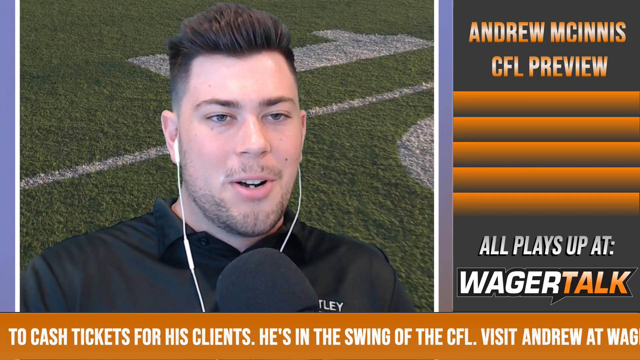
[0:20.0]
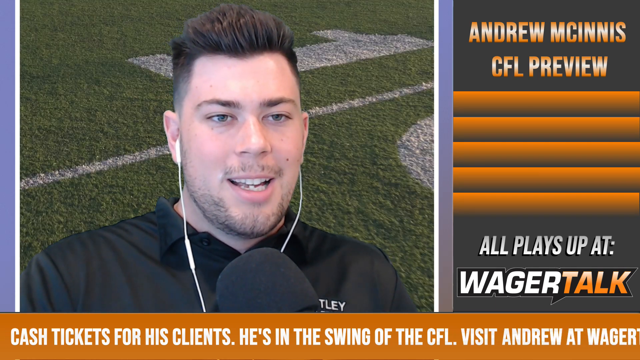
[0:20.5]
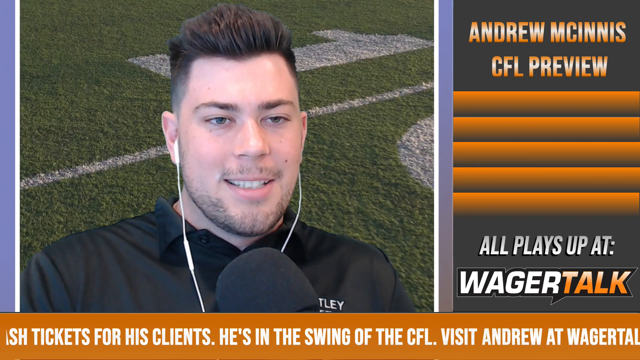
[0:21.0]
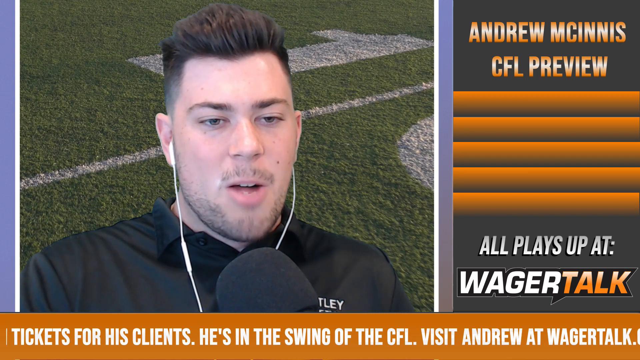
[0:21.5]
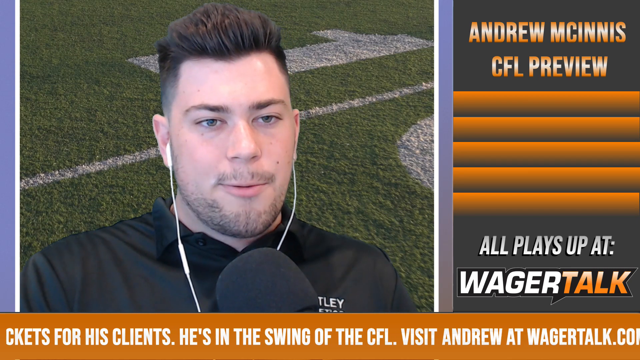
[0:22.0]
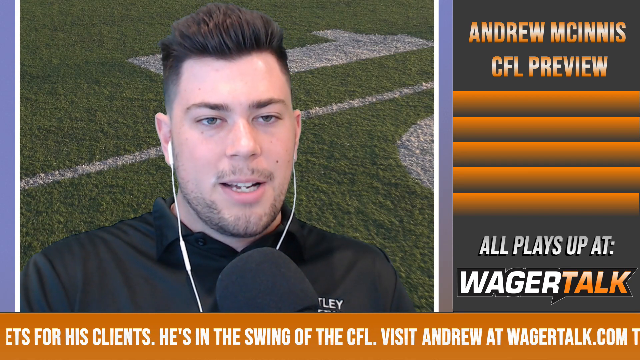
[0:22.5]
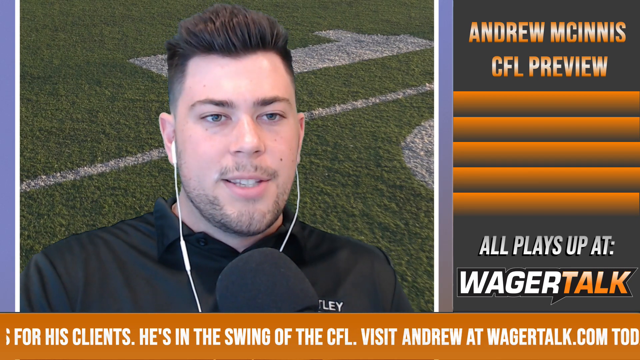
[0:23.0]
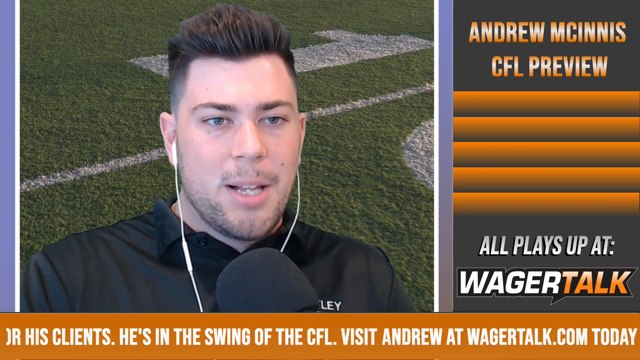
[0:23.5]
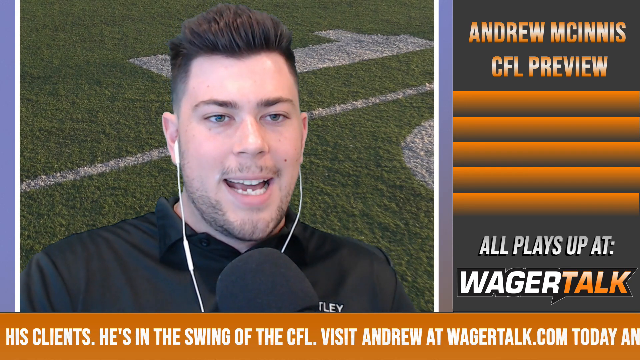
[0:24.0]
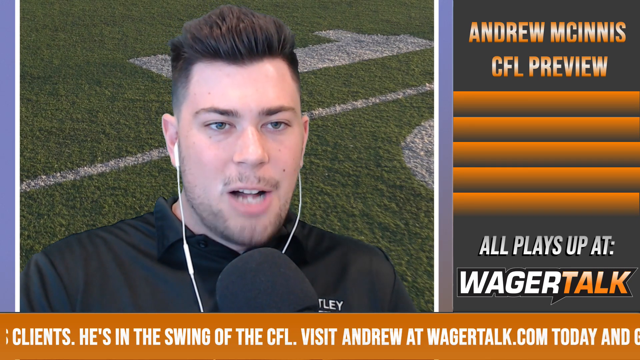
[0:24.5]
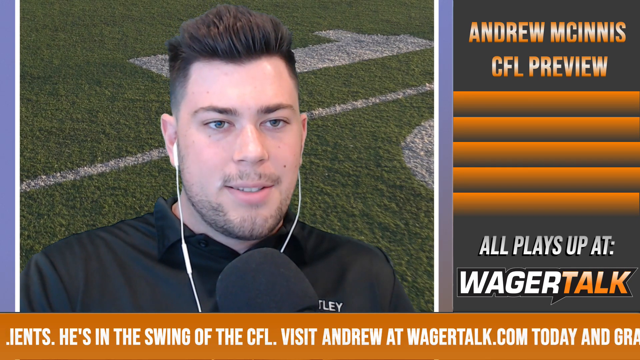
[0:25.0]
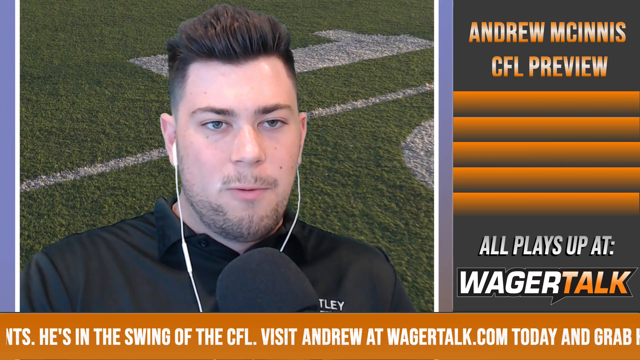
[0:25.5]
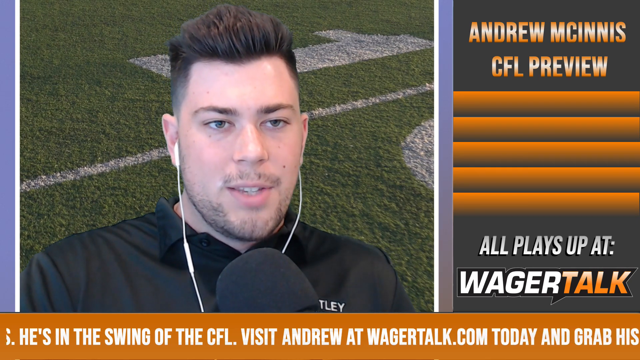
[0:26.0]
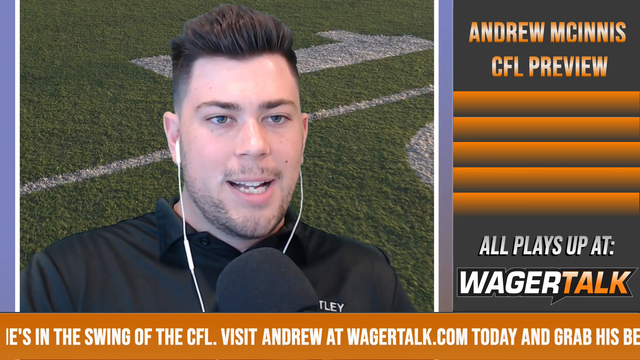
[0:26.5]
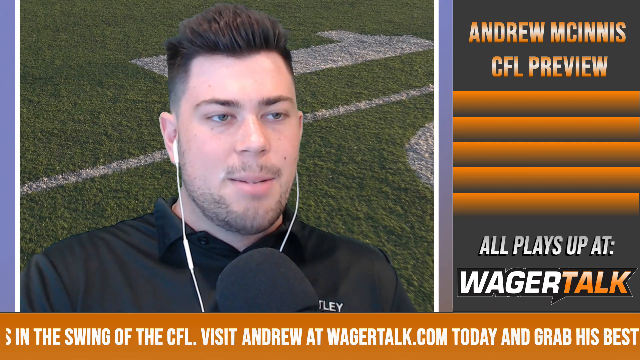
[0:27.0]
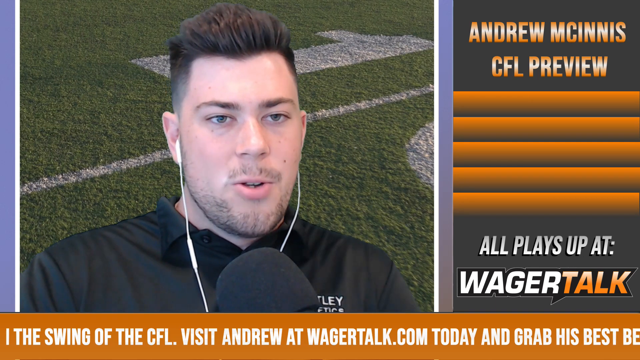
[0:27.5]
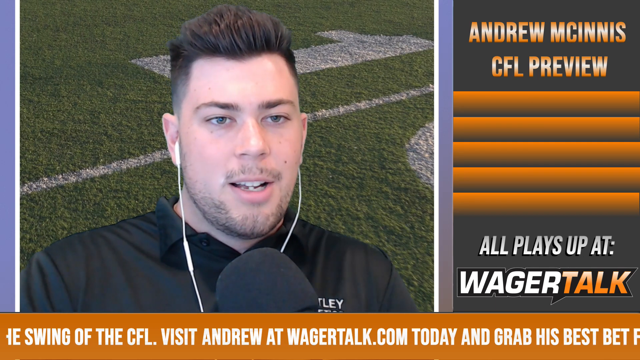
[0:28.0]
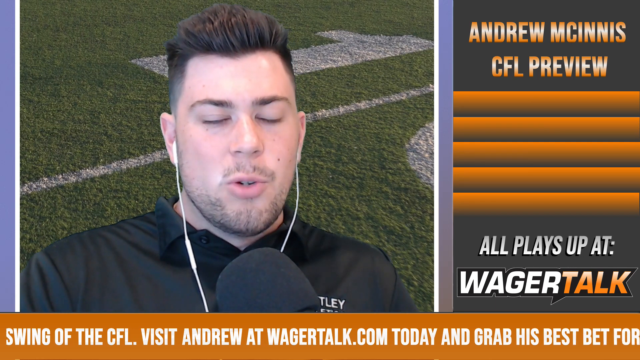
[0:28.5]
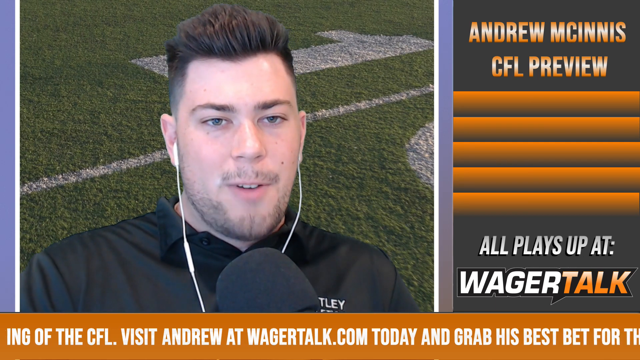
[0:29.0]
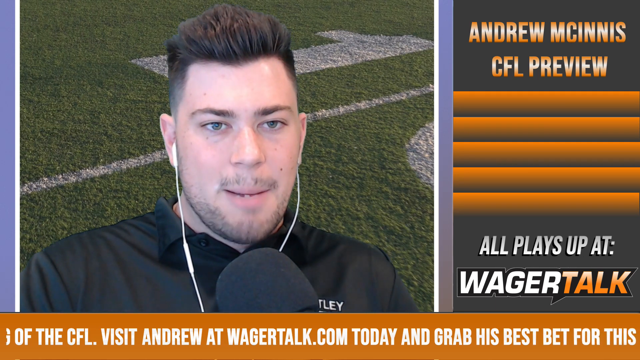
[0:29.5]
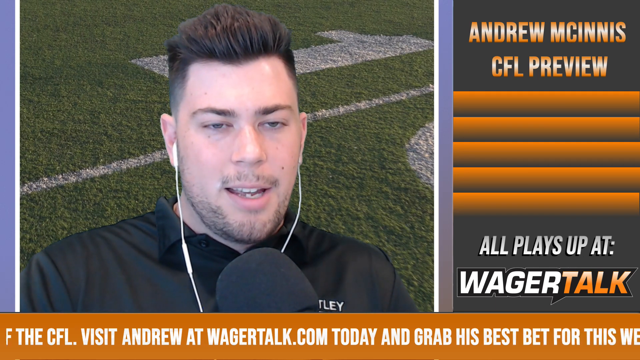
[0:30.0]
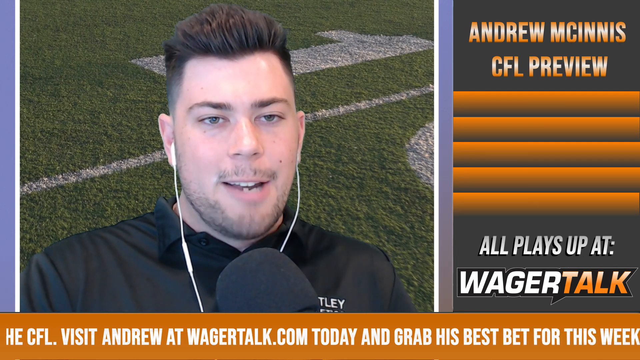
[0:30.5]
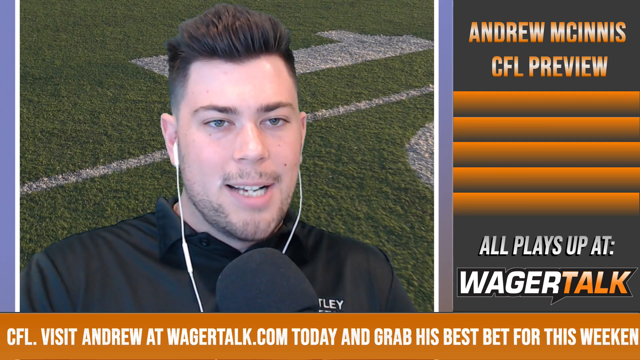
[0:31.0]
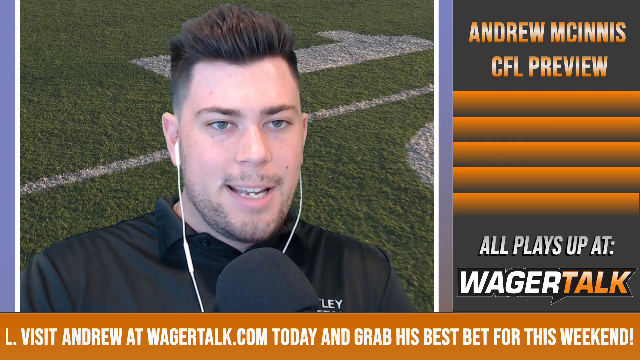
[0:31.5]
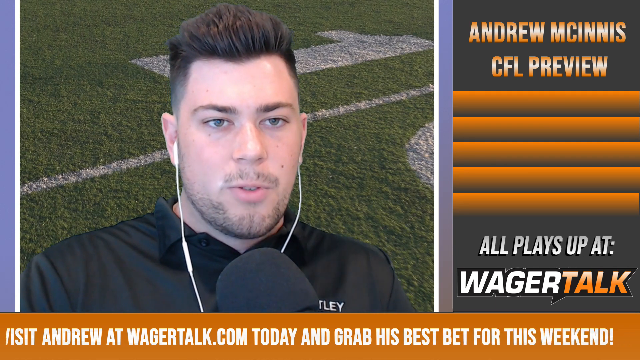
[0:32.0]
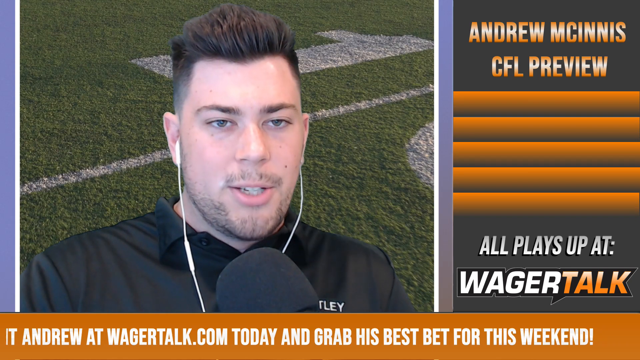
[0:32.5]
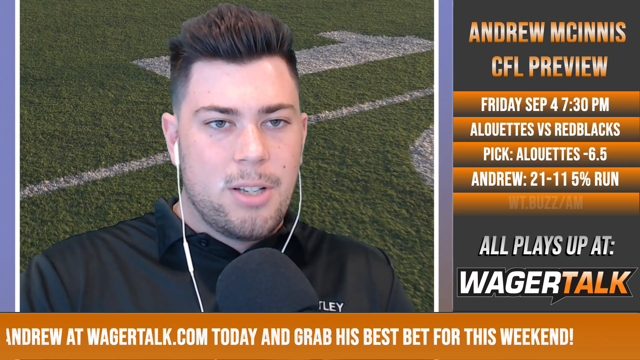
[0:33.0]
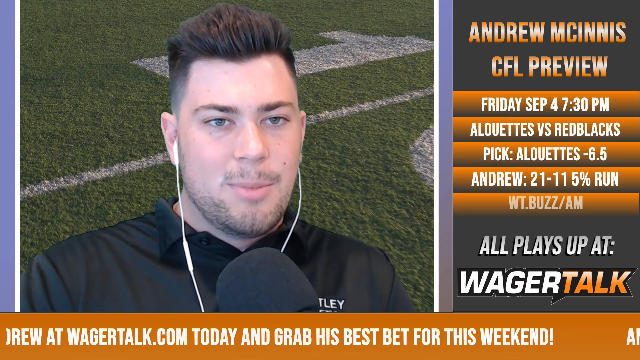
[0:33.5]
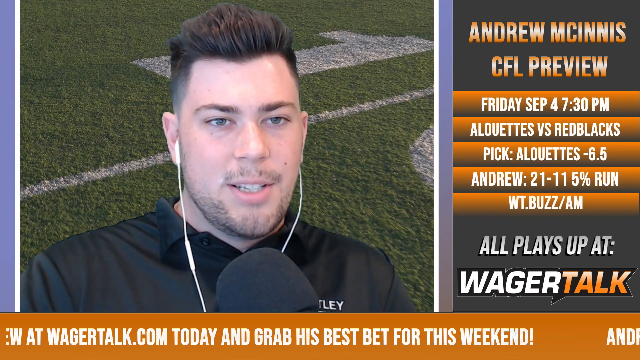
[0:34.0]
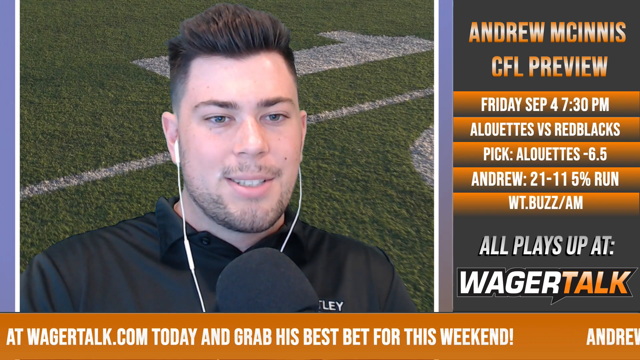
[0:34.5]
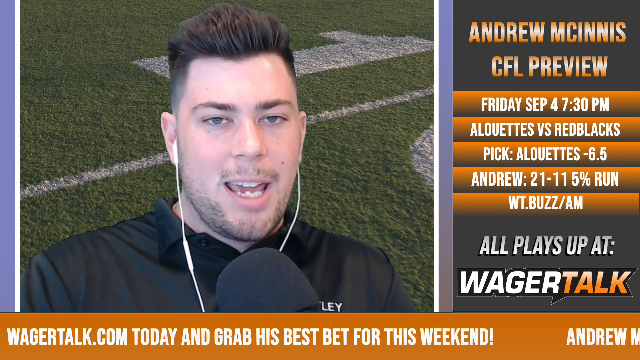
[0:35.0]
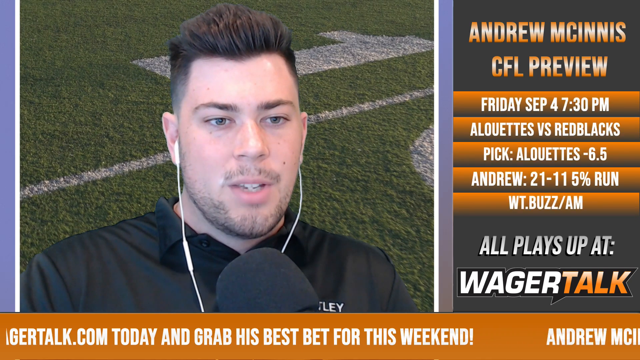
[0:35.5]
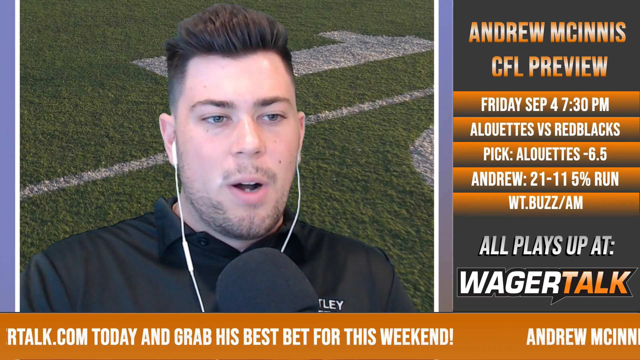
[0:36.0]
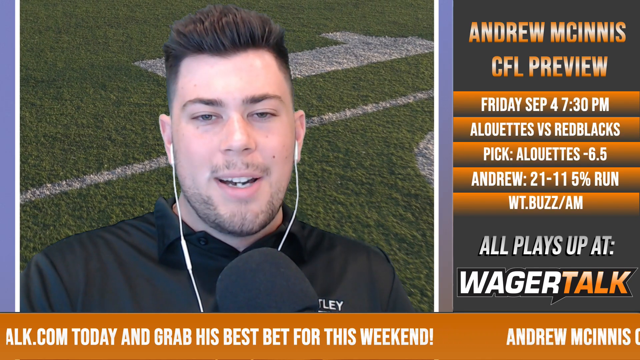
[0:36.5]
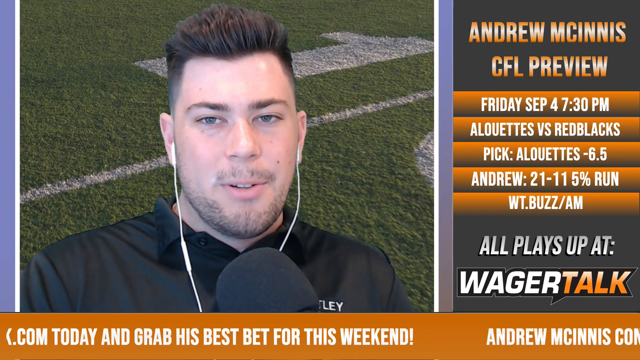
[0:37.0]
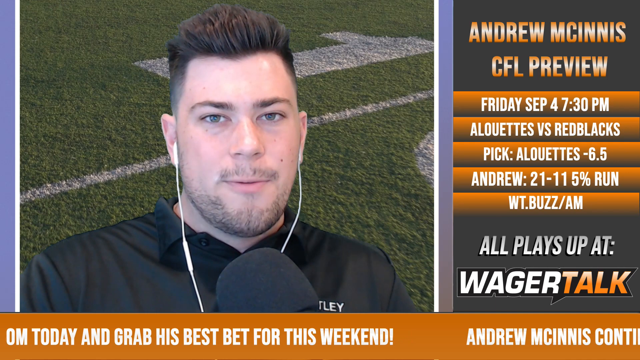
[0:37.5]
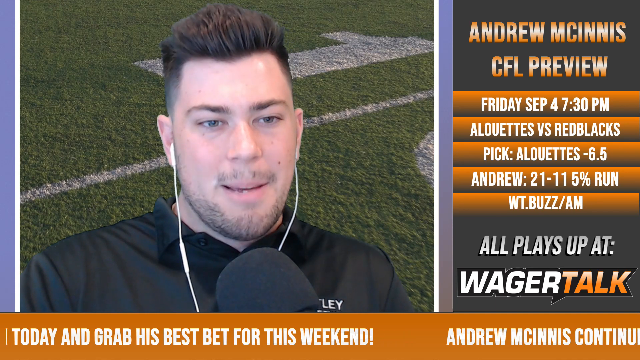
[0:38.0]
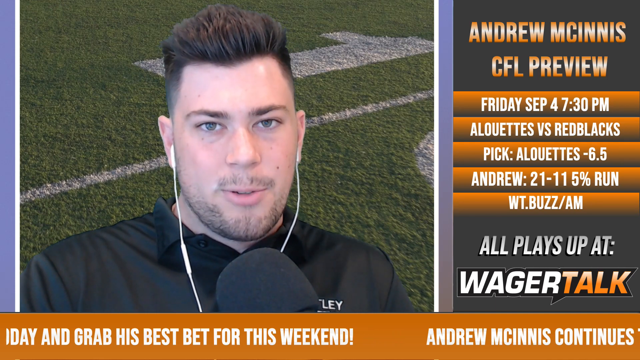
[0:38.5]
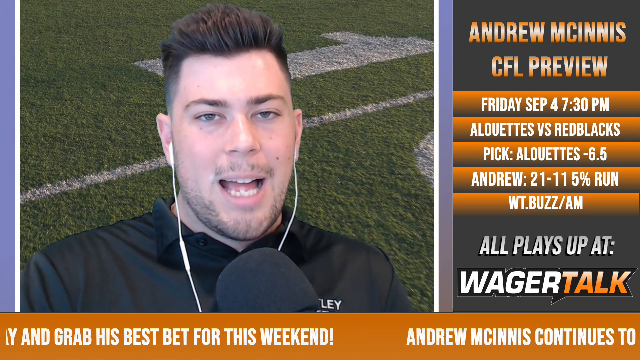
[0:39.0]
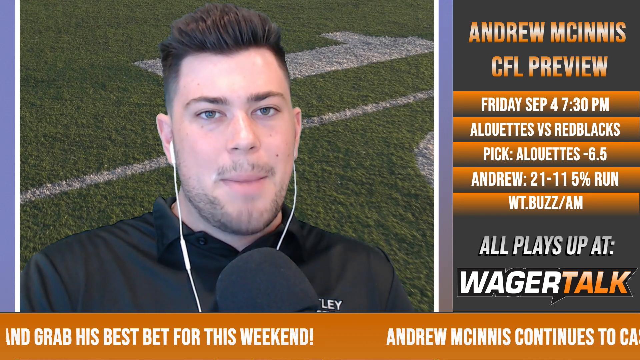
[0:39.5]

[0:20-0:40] The shot begins with a completely green screen, then shows the man talking, wearing a black polo shirt with a black foam microphone in front of him. An orange ticker at the bottom reads "Andrew McGinnis continues to cash tickets for his clients. He's in the swing of the CFL. Visit andrew at wager talk.com today and grab his best bet for this weekend!" On the split screen the text says "Andrew McGinnis CFL preview" on Friday September 4th at 7:30 p.m., for the Alouettes versus the Red Blacks. His pick is the Alouettes 6.5, and it says "Andrew 21 to 11" with a 5% run, followed by "wt.buzz/am" and "all plays up at wager talk." The man wears wired earbuds with the cord hanging out of his ears. Behind him appears to be the ten yard line, with a one visible on the grass behind his head.